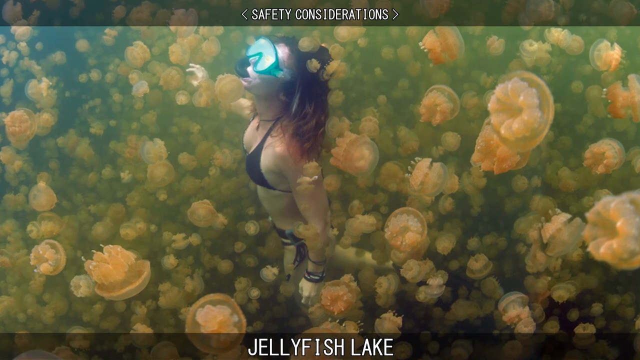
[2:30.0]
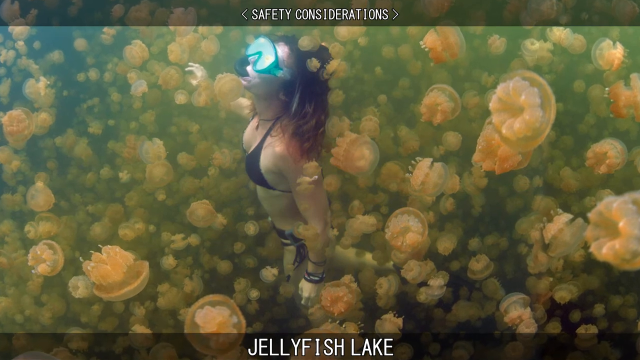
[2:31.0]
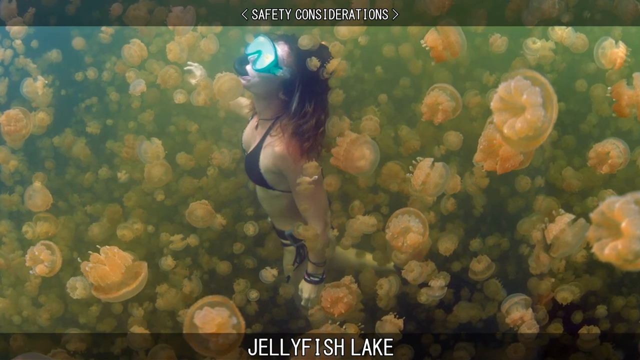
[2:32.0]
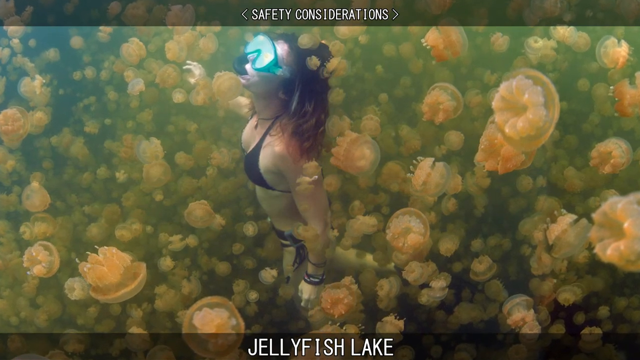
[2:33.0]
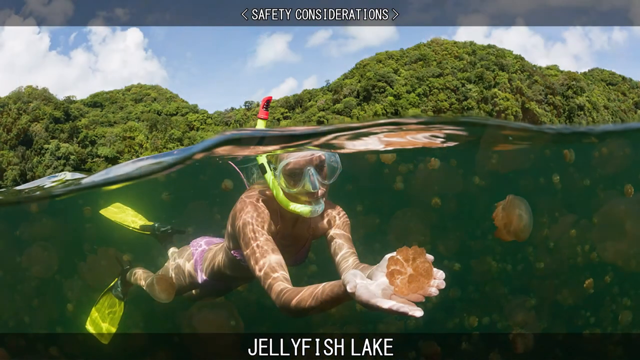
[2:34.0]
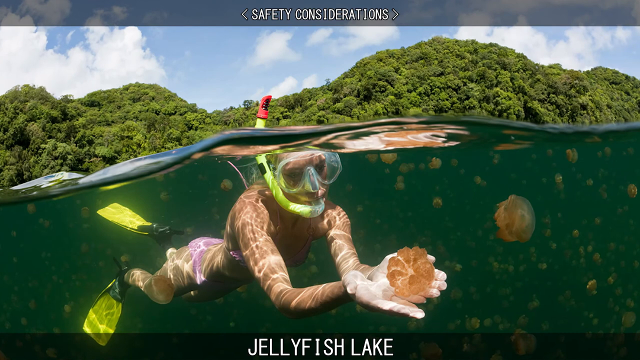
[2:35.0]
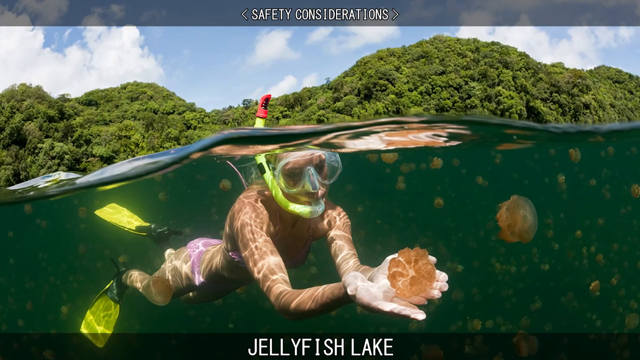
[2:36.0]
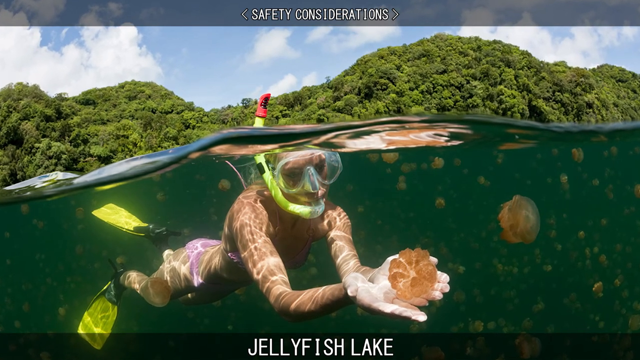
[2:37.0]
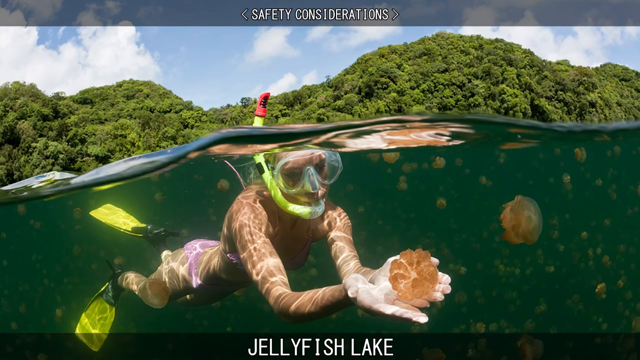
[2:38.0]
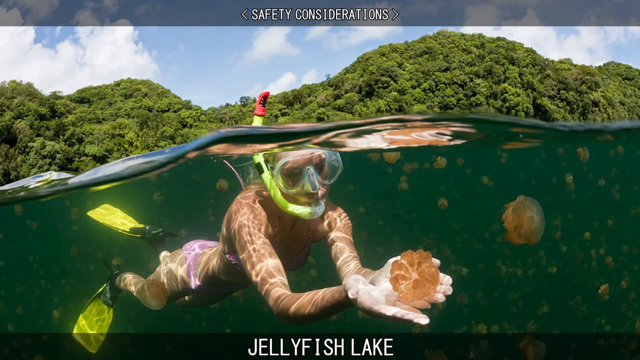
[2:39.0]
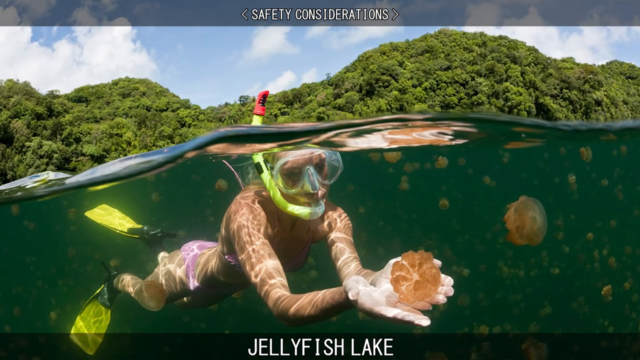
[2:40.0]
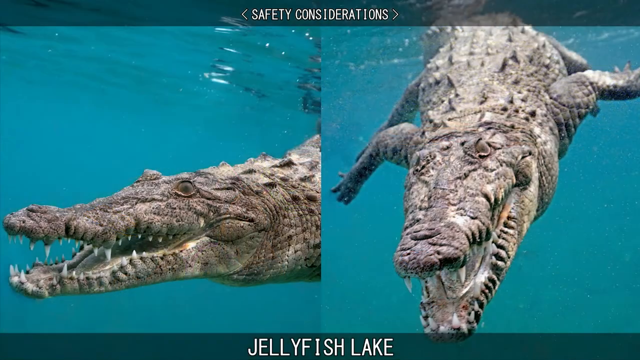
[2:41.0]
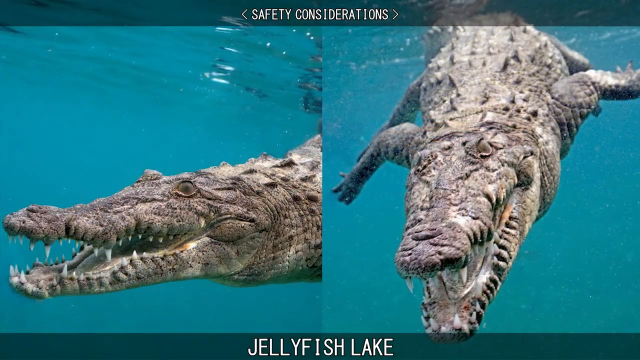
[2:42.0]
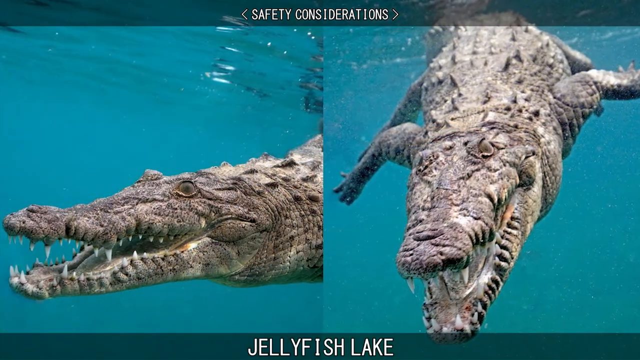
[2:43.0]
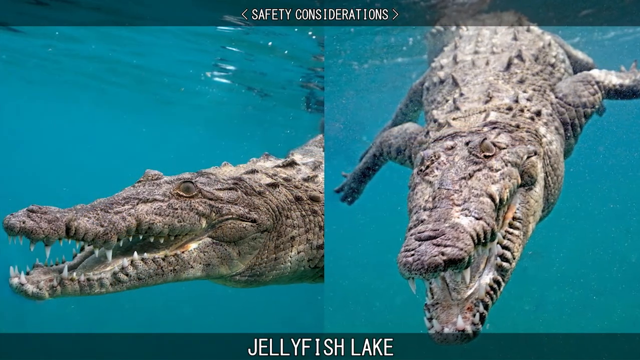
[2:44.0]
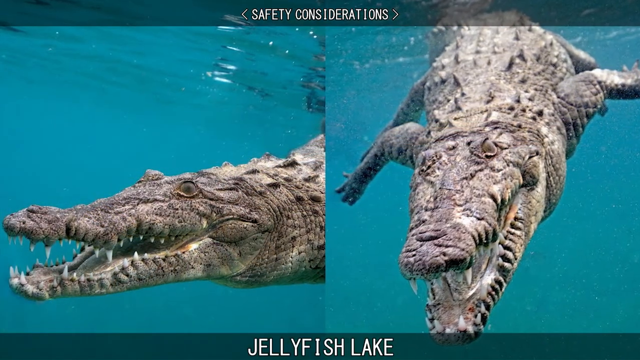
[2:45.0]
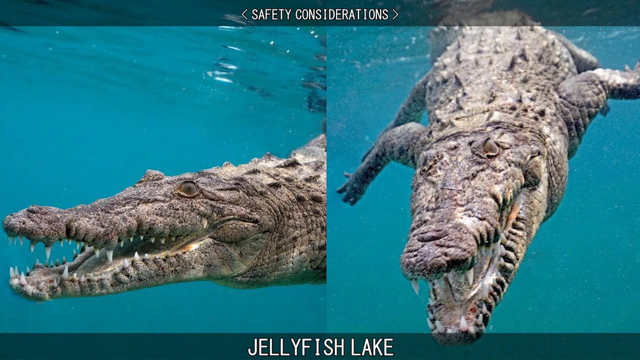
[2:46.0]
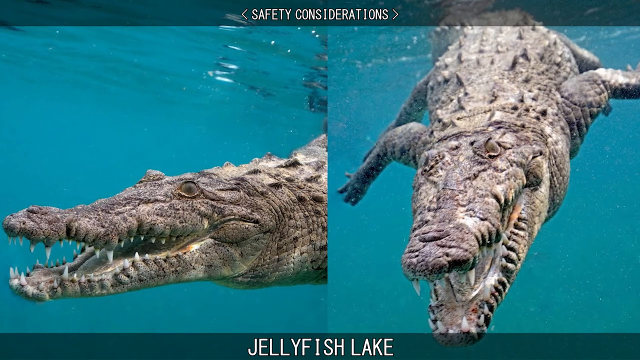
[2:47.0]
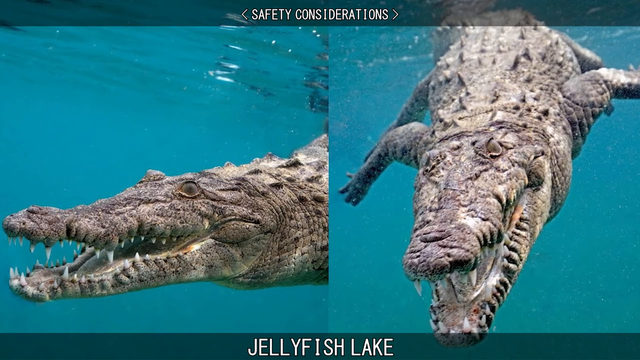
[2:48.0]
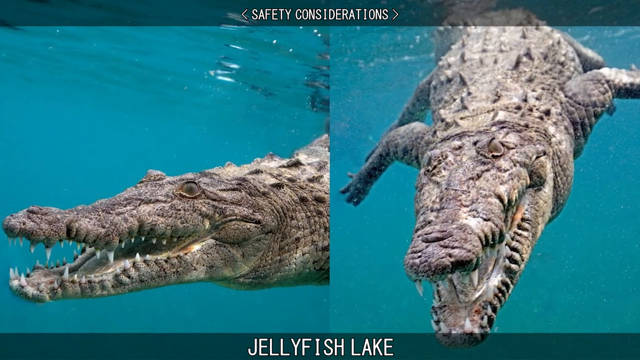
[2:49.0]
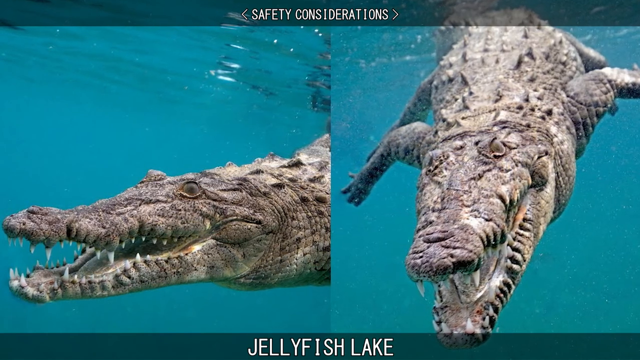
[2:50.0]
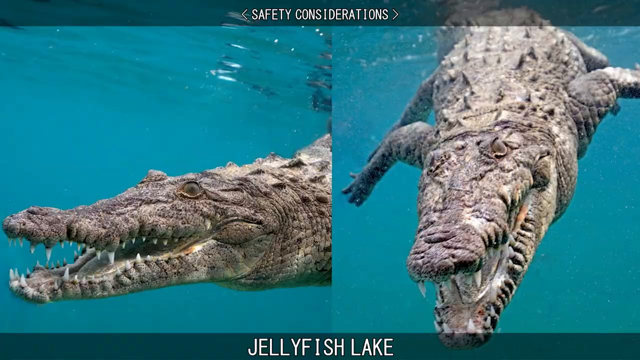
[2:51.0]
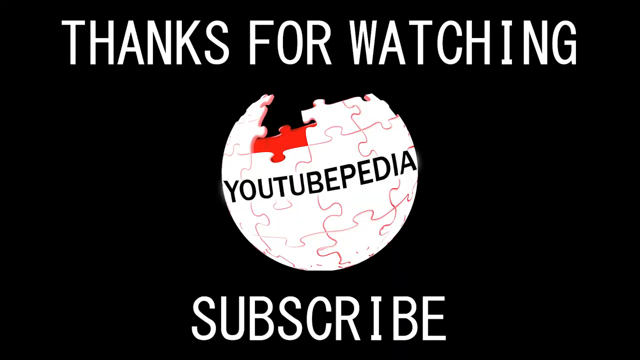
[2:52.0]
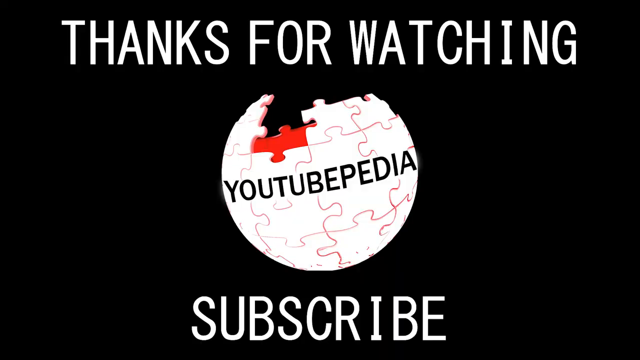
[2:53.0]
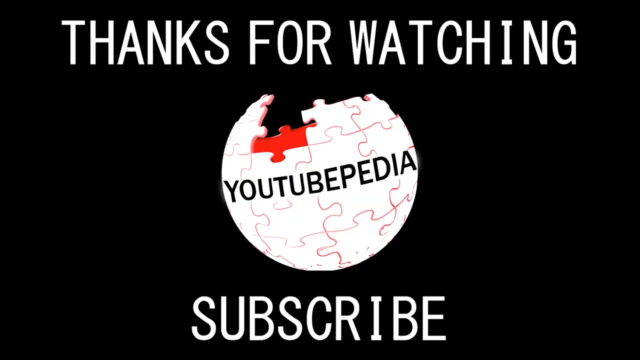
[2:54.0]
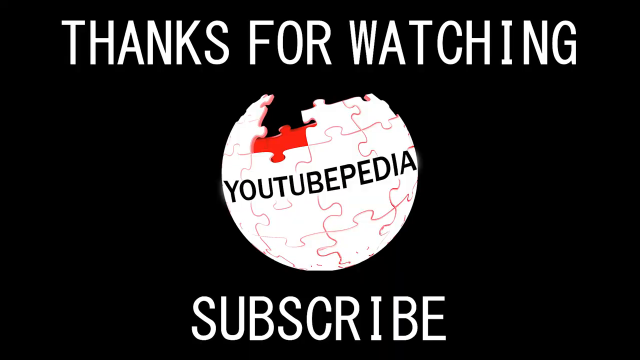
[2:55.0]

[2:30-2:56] A woman who appears to be wearing a black two-piece bikini is in the lake with tens of thousands of jellyfish. She is wearing goggles and what looks to be a snorkel, not scuba gear. People are also seen in the water barely below the surface with snorkel gear and gloves that look like white vinyl, touching the jellyfish. The video indicates that crocodiles may live in the lake, so proper precautions are needed to know when it is and isn't safe to be in the water with the jellyfish.